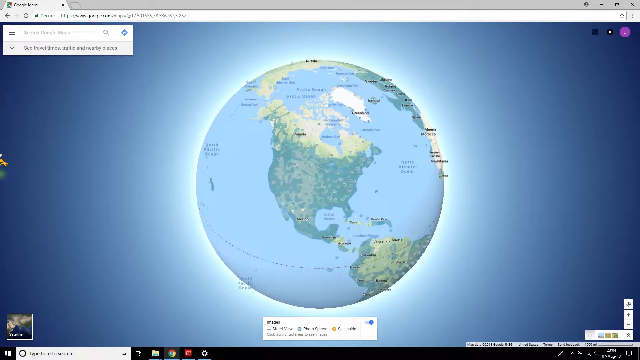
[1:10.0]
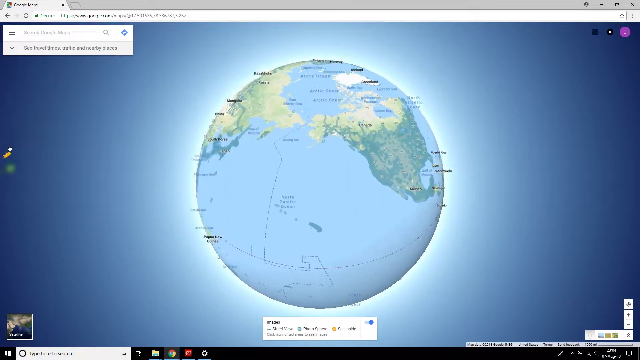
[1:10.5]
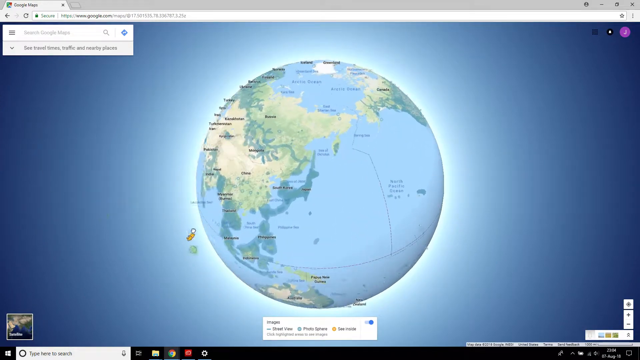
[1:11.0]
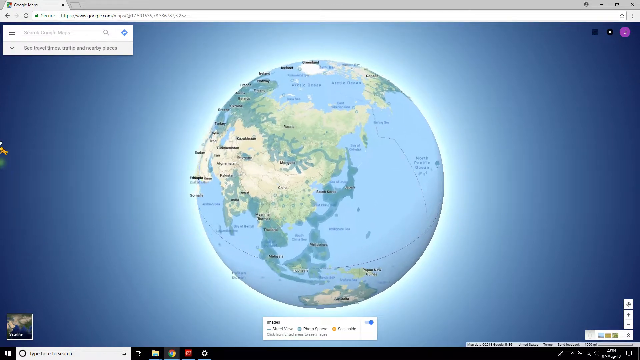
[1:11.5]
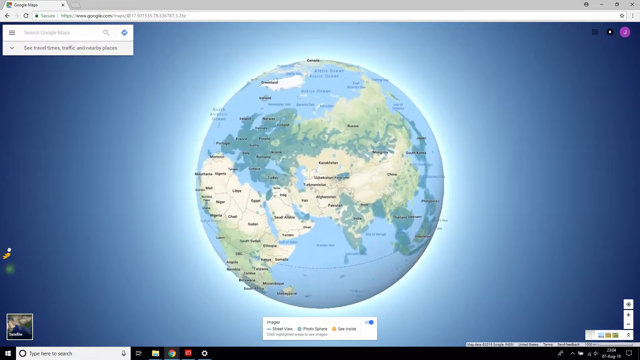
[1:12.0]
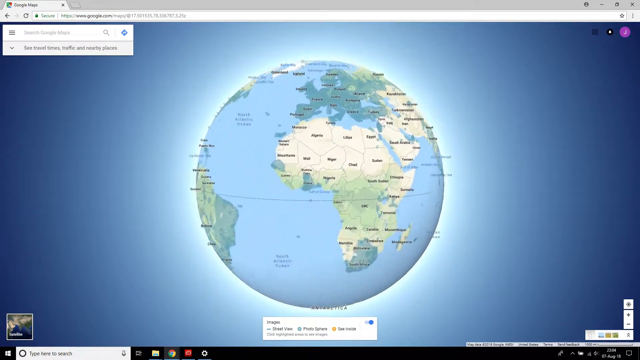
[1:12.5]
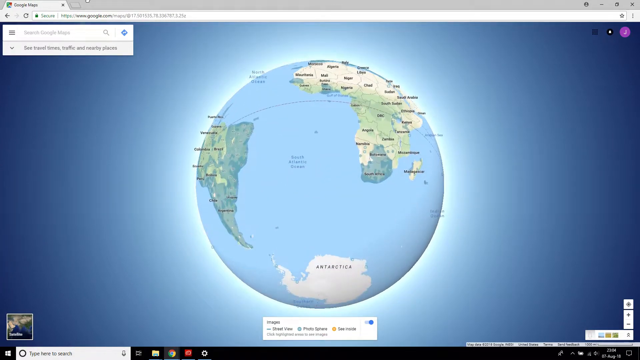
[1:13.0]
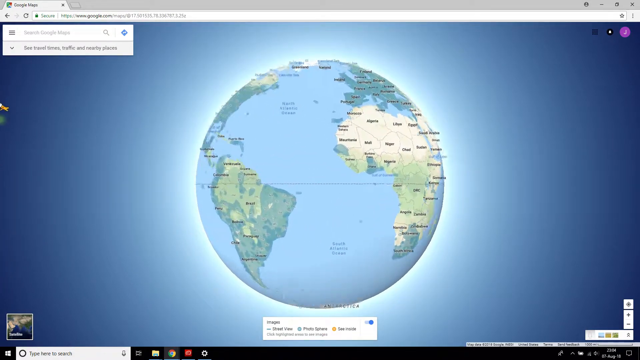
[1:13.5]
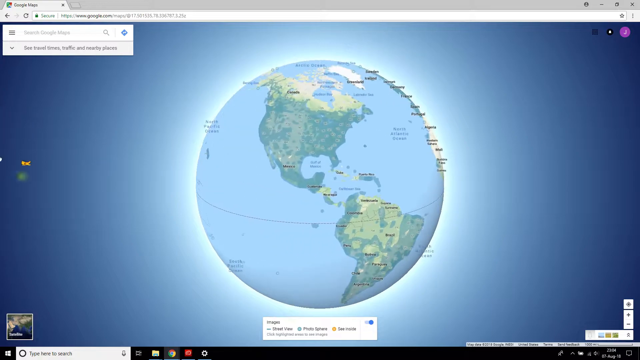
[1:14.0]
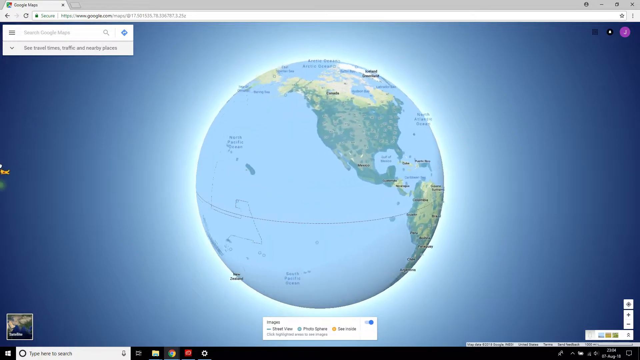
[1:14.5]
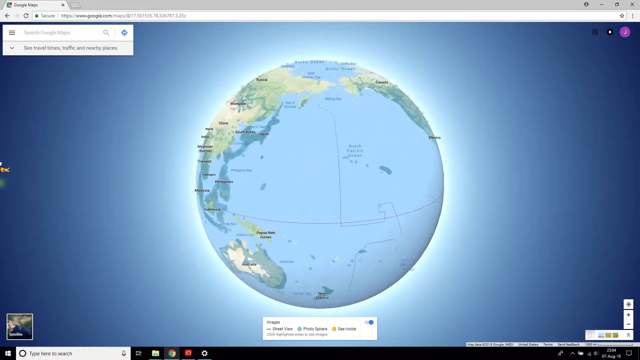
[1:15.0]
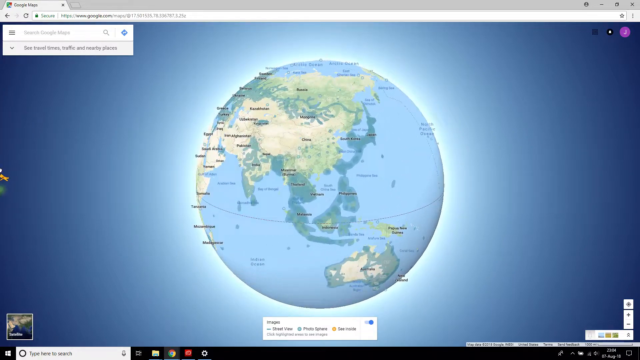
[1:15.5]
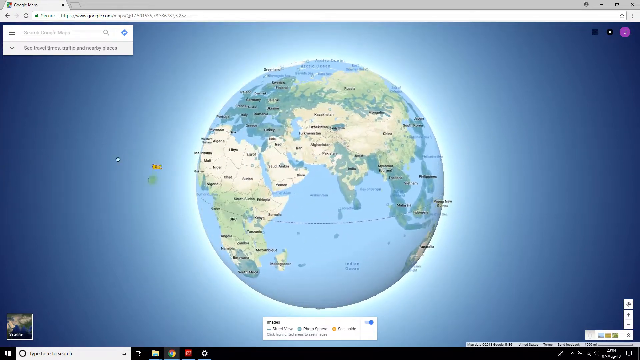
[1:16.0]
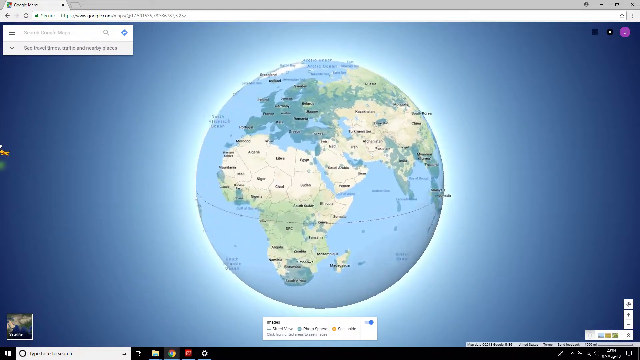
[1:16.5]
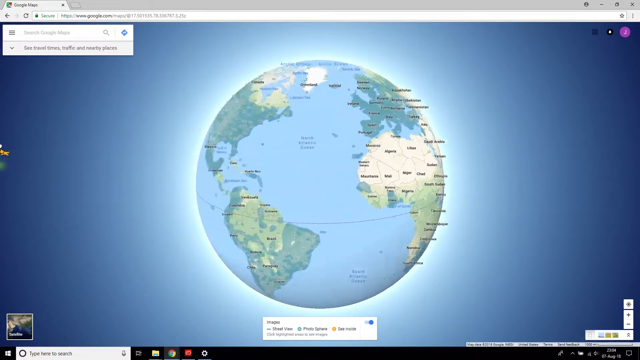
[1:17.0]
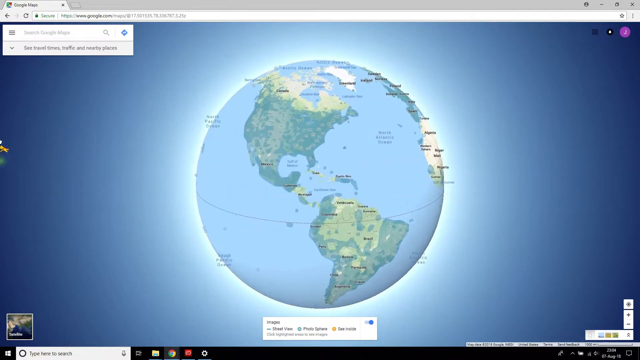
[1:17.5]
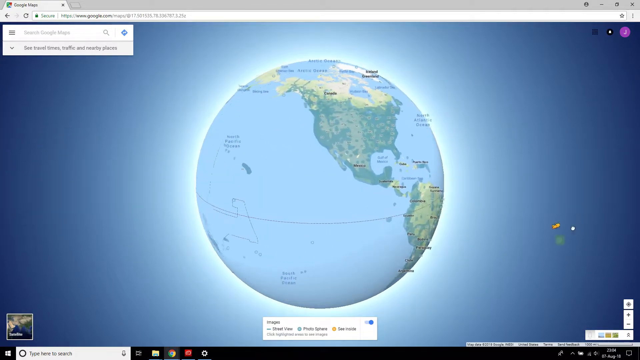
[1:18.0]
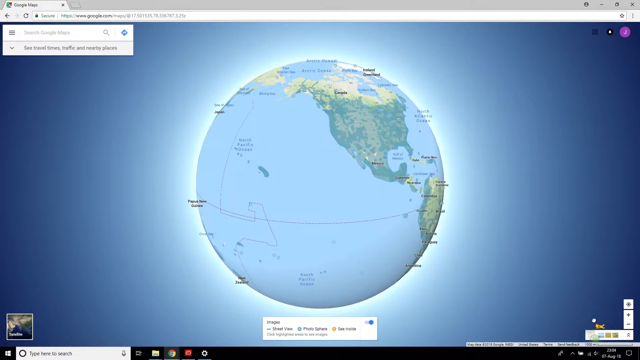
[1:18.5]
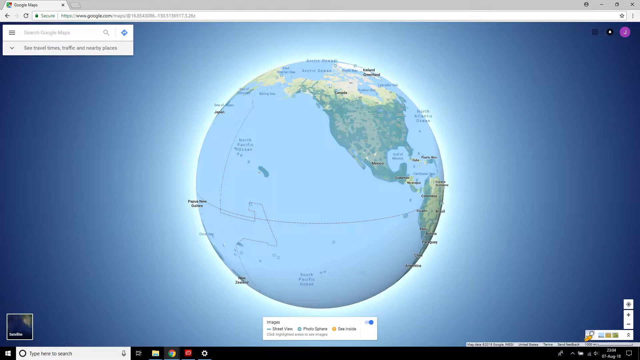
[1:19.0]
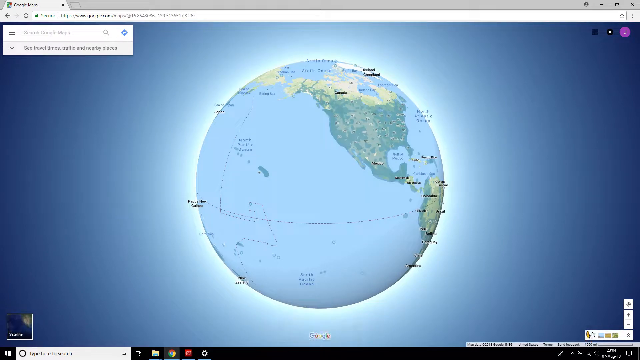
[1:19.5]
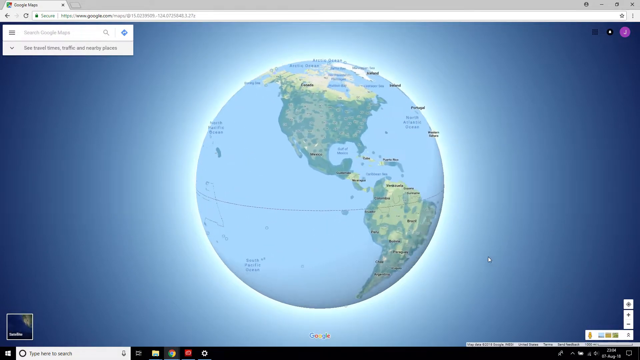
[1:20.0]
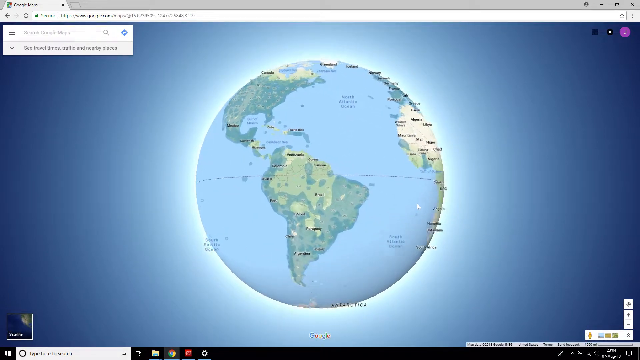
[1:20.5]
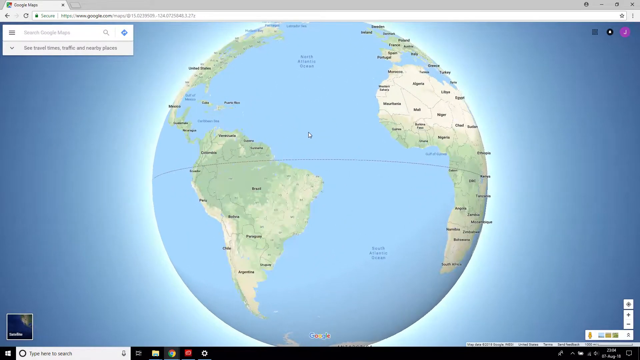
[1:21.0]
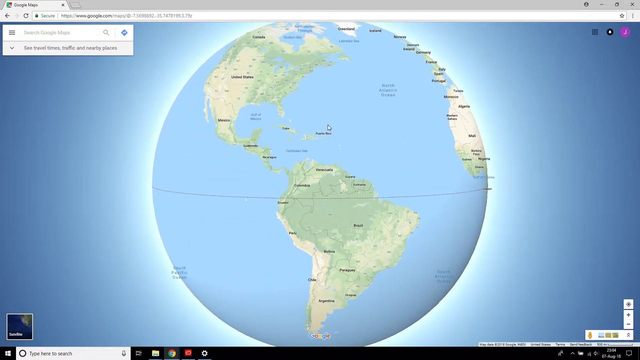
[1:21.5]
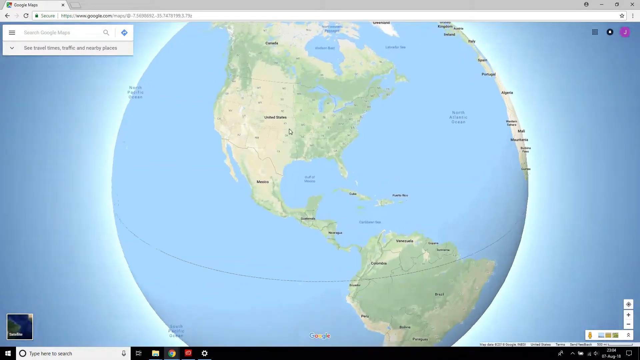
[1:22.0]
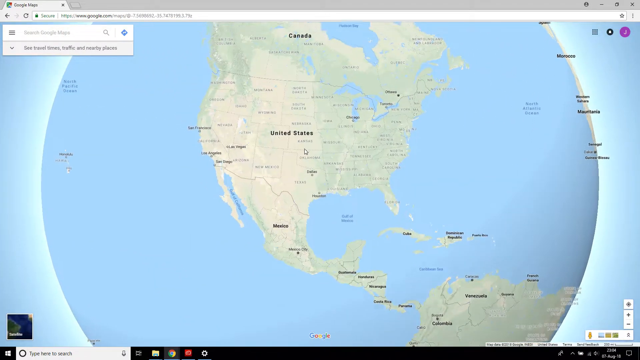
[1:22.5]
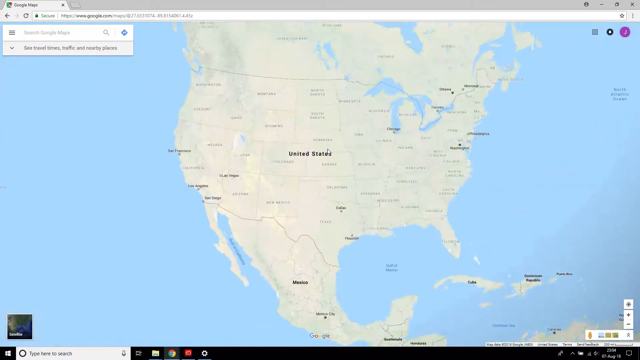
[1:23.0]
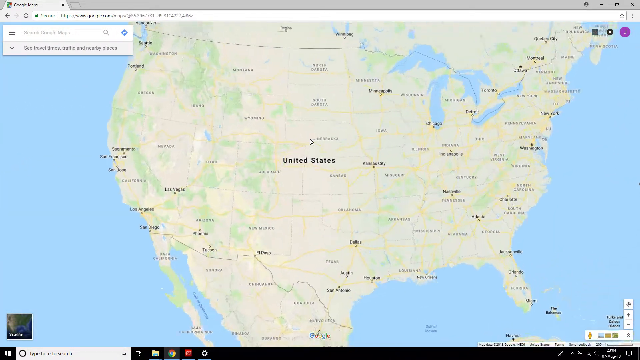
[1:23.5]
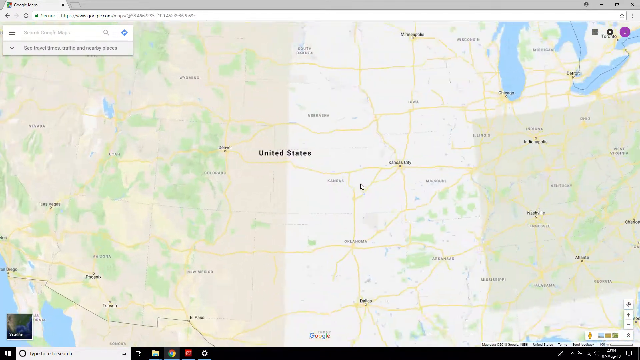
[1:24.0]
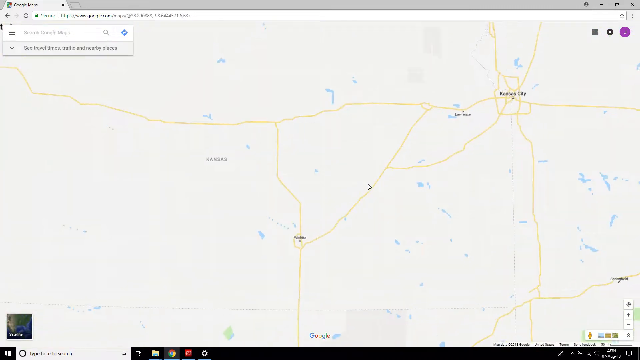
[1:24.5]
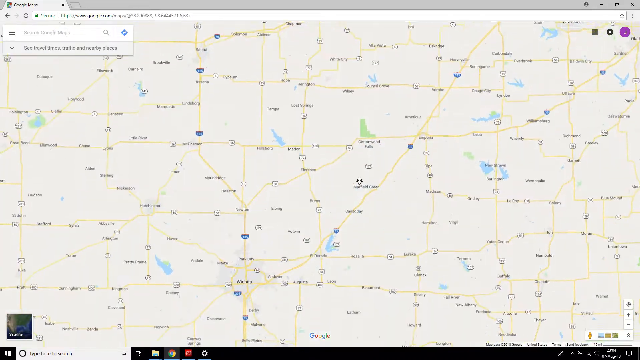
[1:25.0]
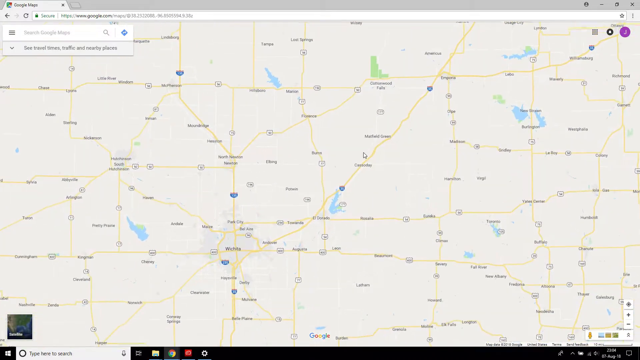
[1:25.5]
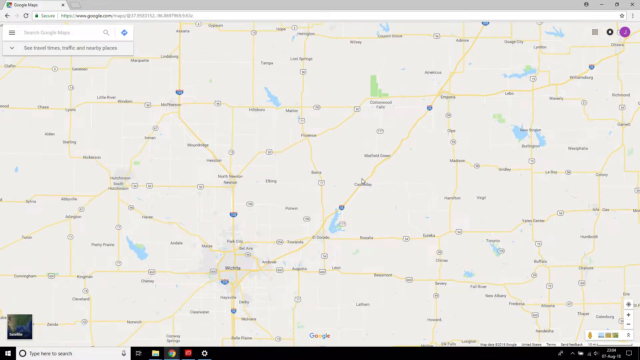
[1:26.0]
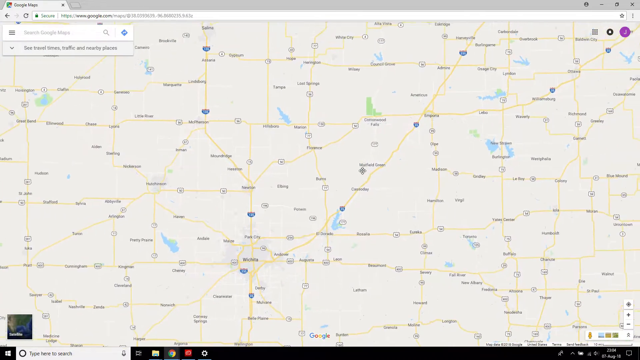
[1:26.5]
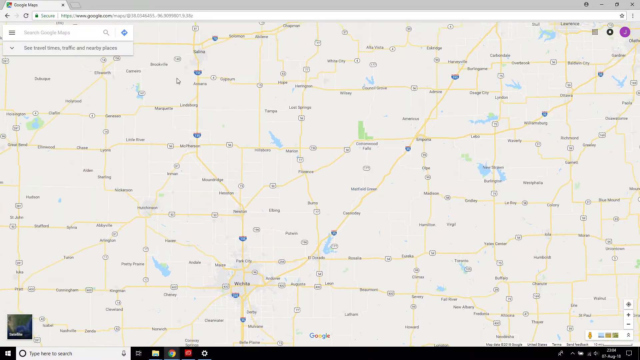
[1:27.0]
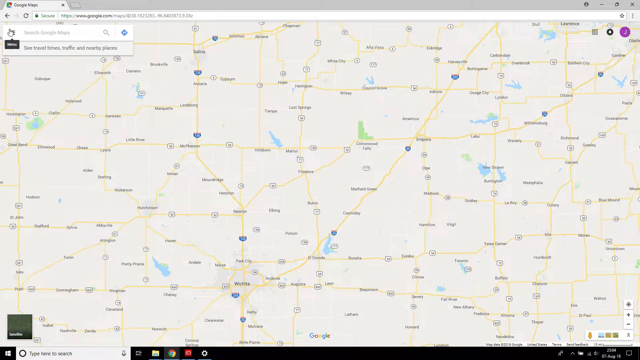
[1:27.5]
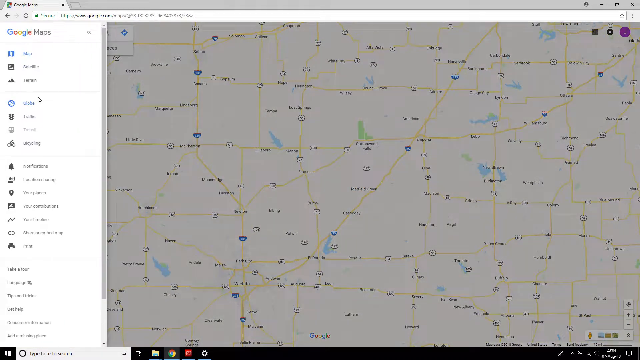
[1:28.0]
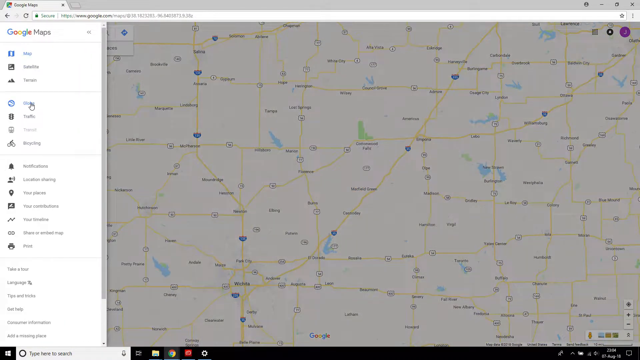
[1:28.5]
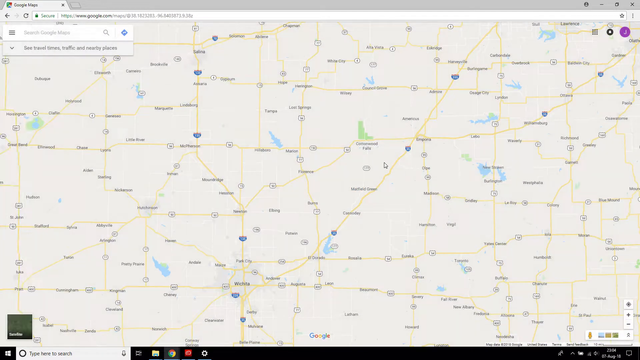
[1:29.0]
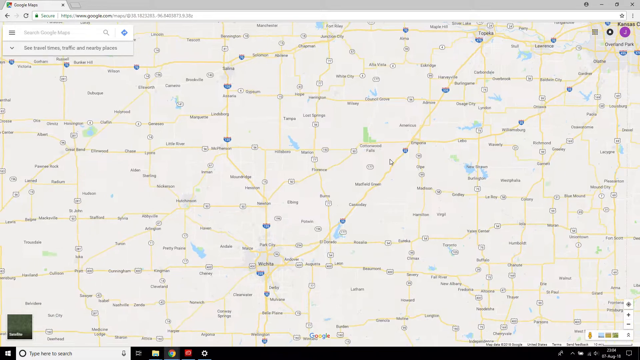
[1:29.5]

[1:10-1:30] The view is zoomed out on the whole globe, showing the United States of America, then the globe spins around to Africa and down to the Antarctic. The person spins the globe around a couple of times, looking at the countries, and then at the ocean. They then zoom in on the U.S., basically all the way in, apparently looking at some of the roads. It is hard to tell exactly where they zoom in; it seems to be somewhere in the central U.S., and text possibly reading "Kansas" passes by quickly. Interstate highways are visible.